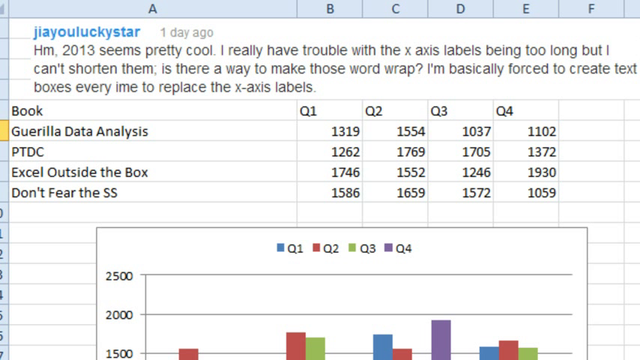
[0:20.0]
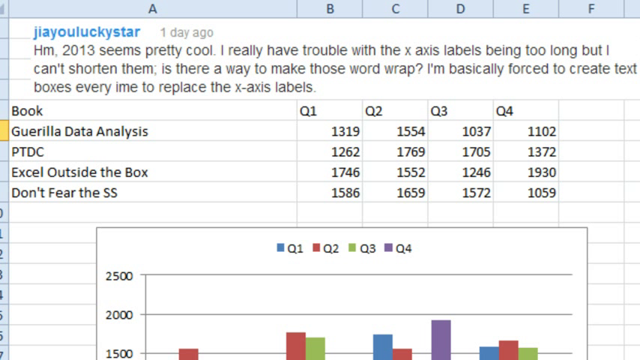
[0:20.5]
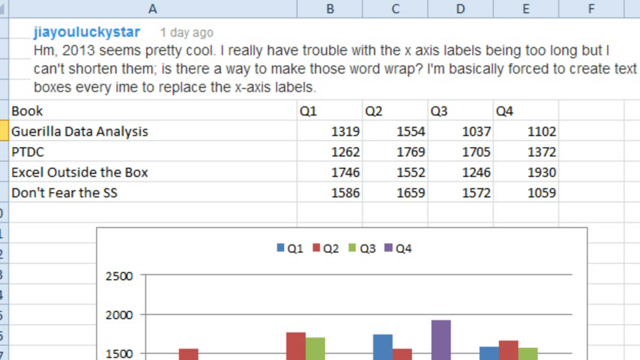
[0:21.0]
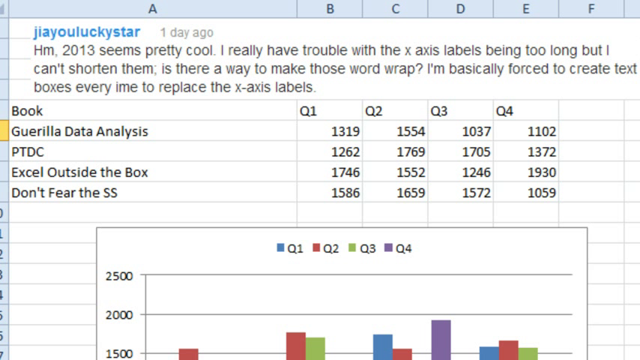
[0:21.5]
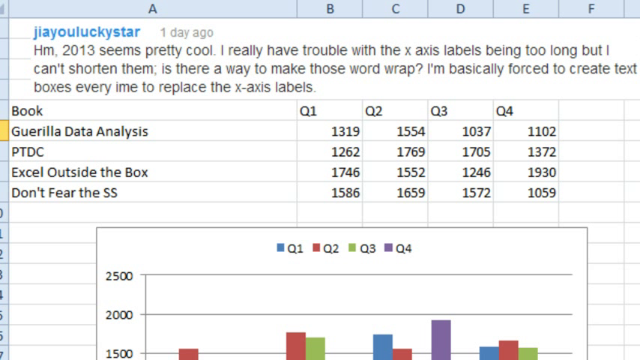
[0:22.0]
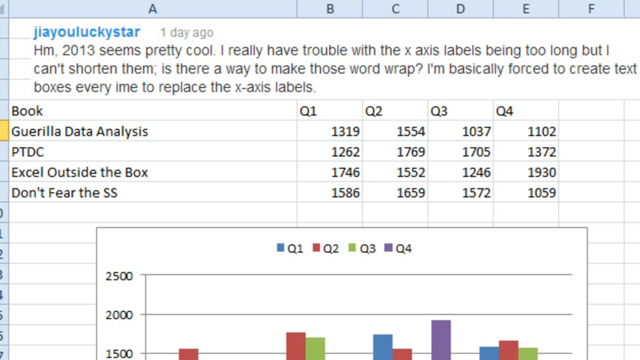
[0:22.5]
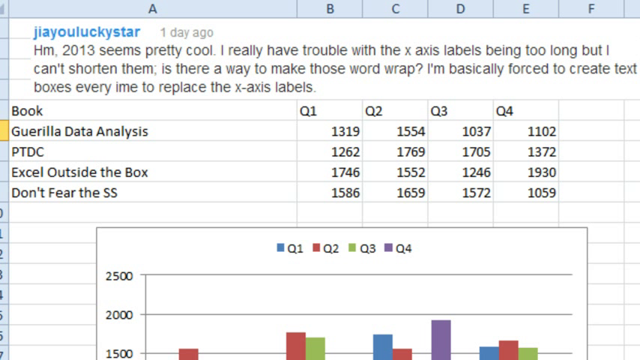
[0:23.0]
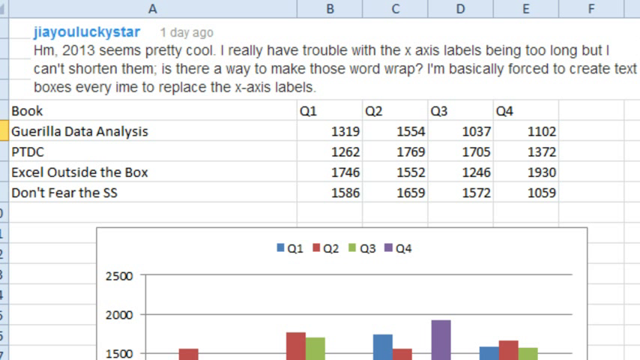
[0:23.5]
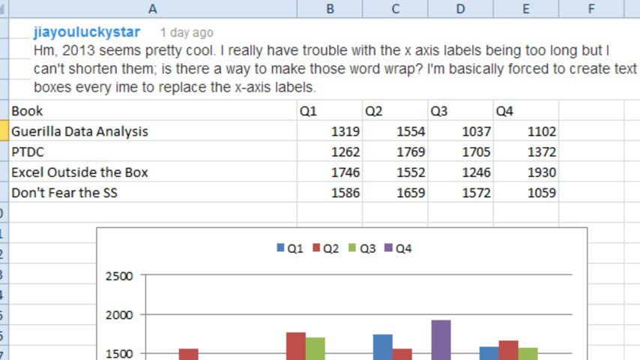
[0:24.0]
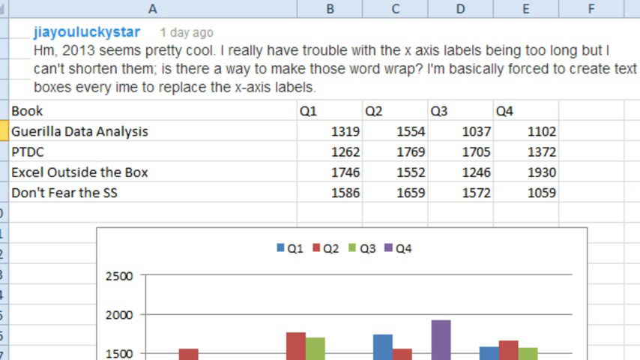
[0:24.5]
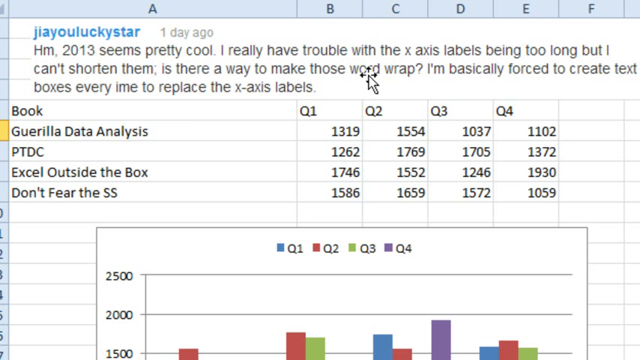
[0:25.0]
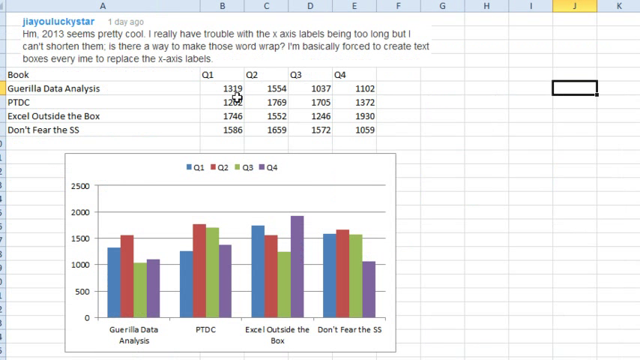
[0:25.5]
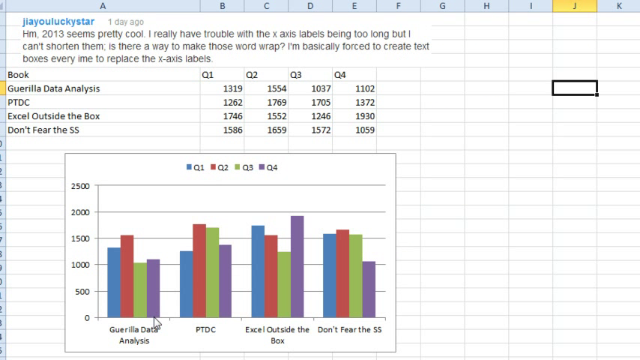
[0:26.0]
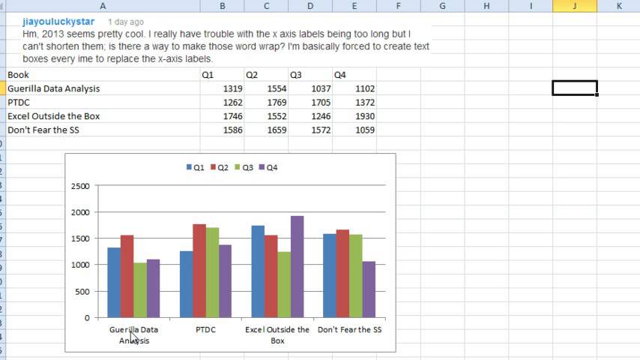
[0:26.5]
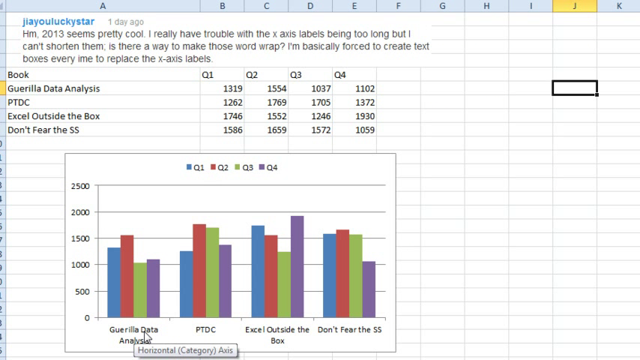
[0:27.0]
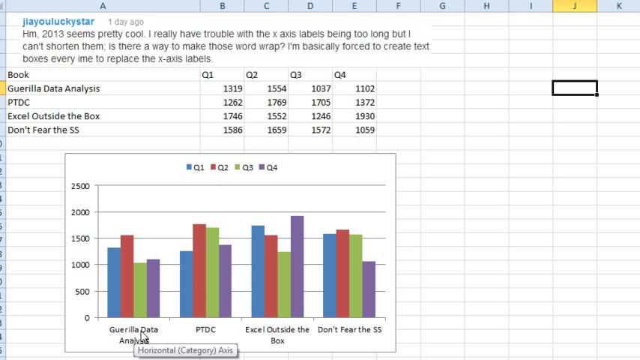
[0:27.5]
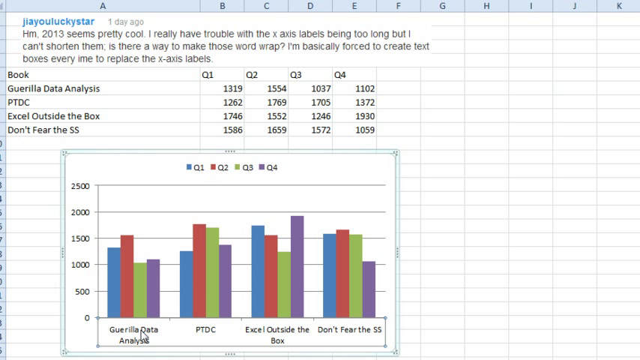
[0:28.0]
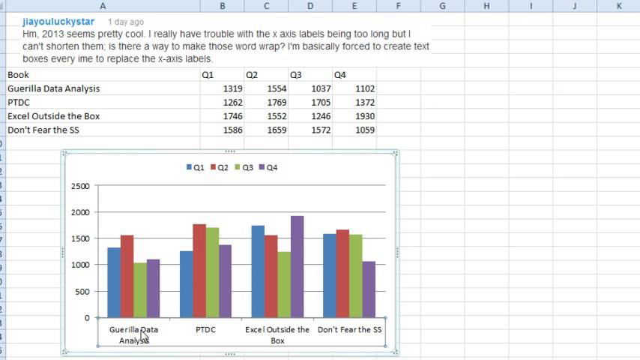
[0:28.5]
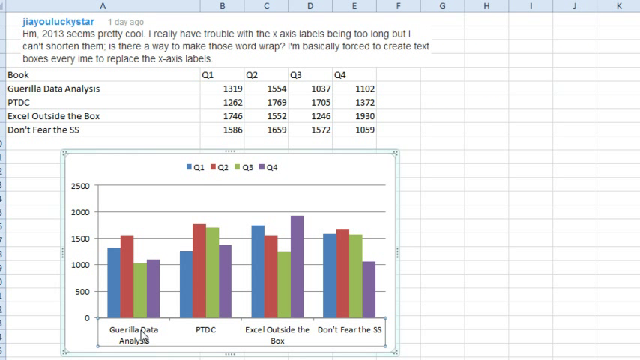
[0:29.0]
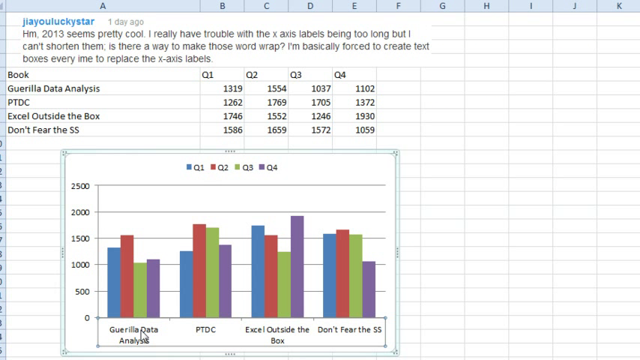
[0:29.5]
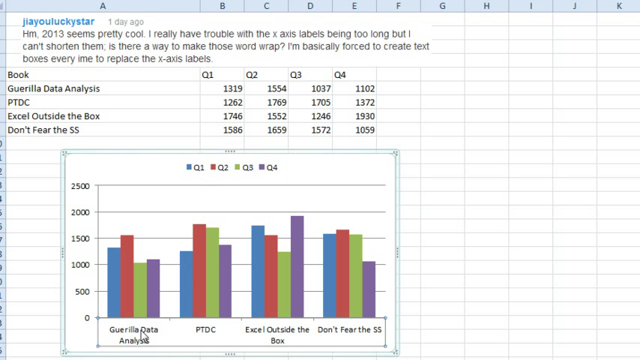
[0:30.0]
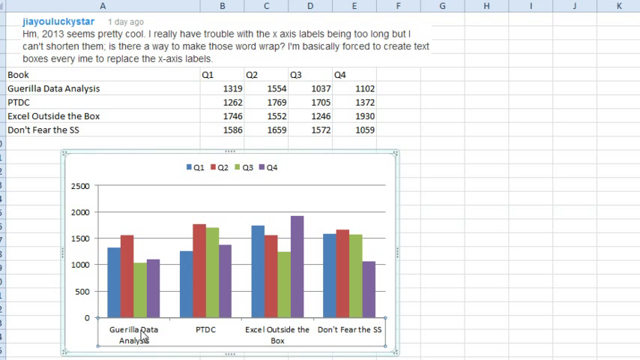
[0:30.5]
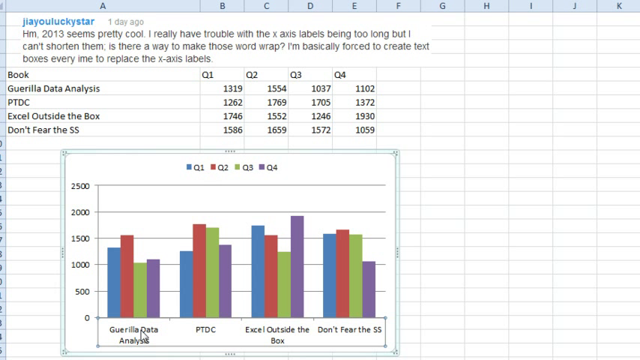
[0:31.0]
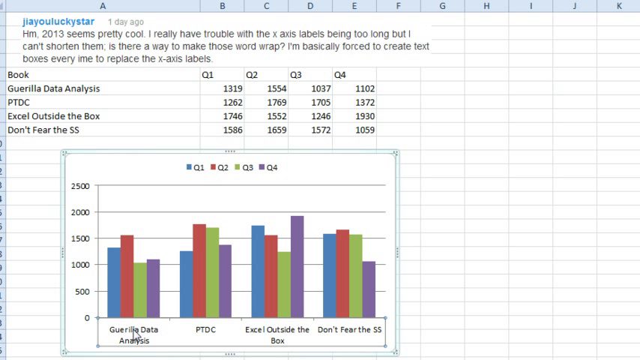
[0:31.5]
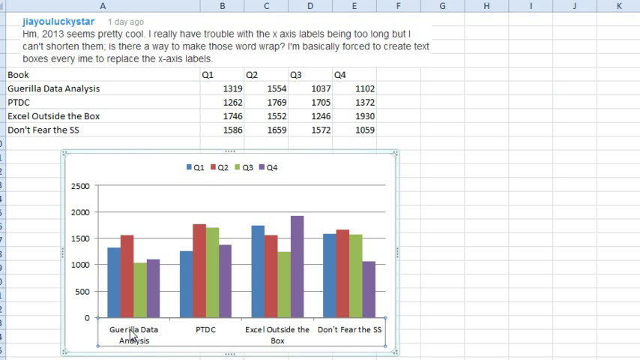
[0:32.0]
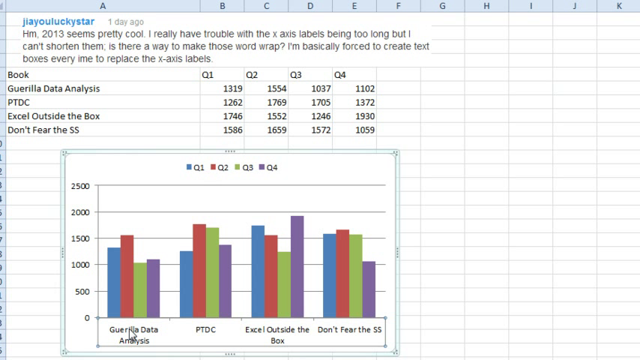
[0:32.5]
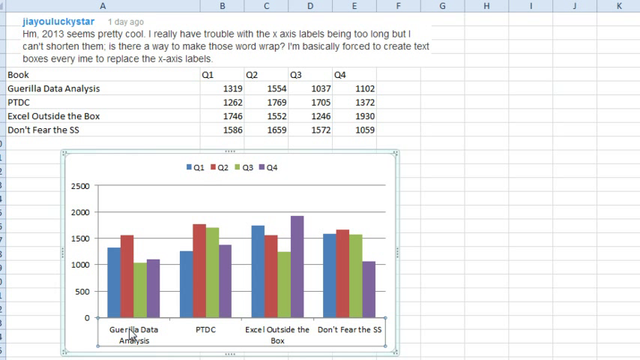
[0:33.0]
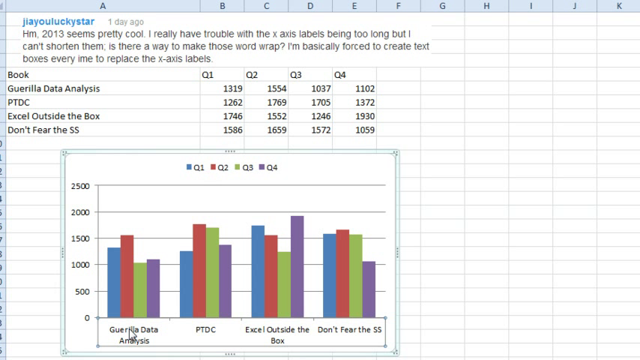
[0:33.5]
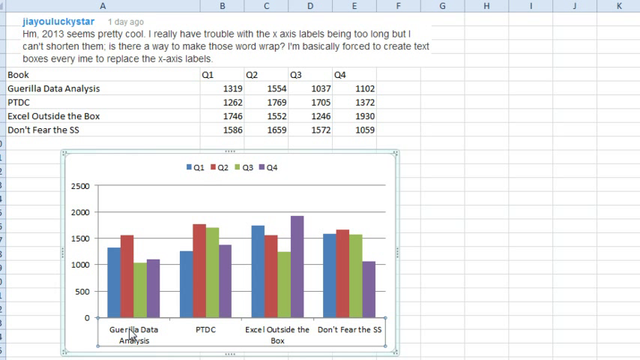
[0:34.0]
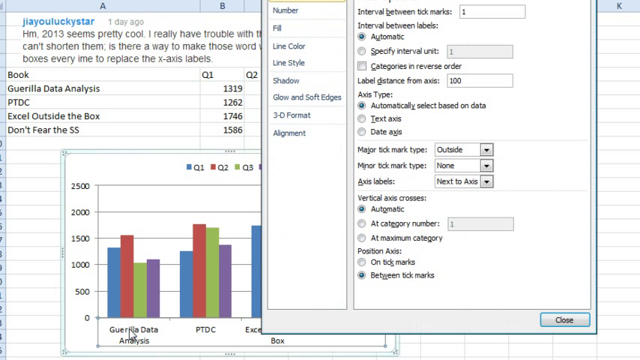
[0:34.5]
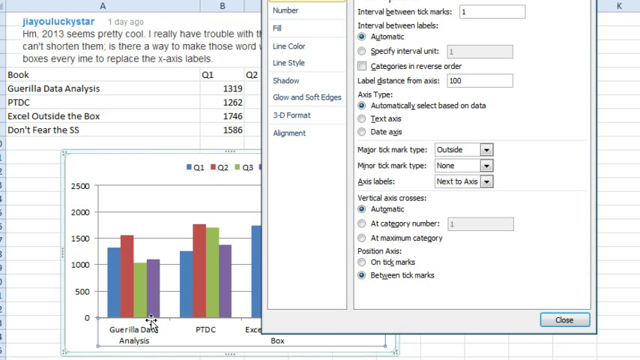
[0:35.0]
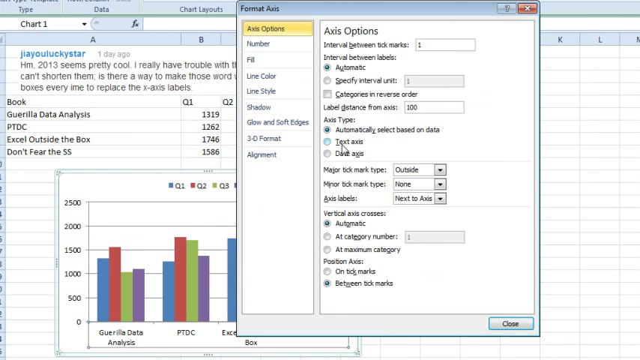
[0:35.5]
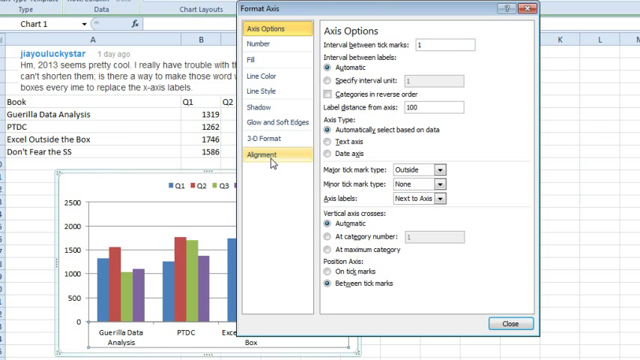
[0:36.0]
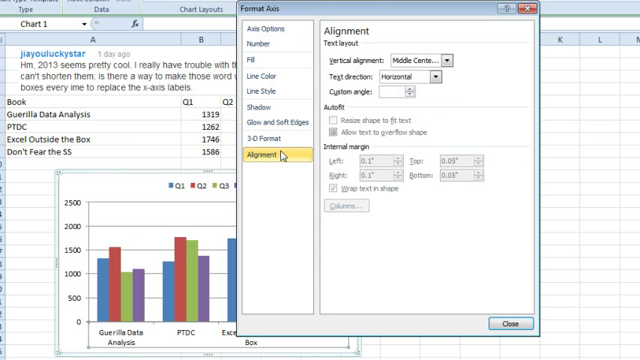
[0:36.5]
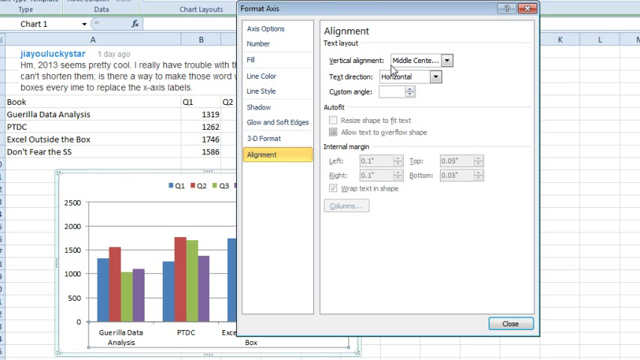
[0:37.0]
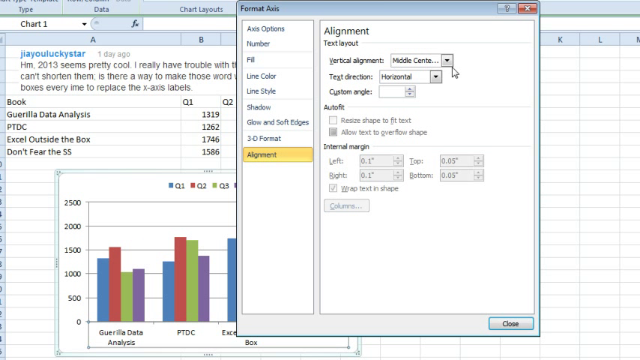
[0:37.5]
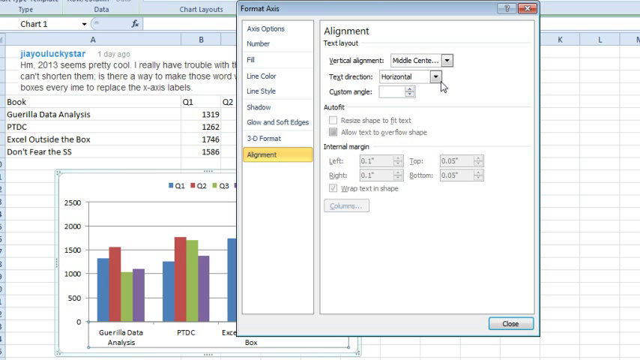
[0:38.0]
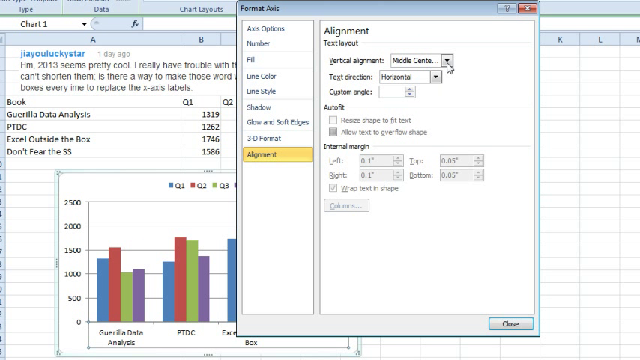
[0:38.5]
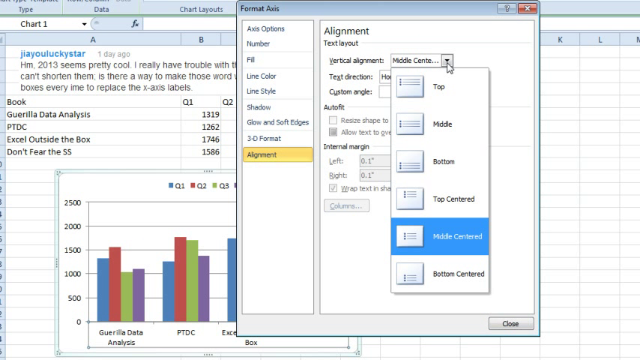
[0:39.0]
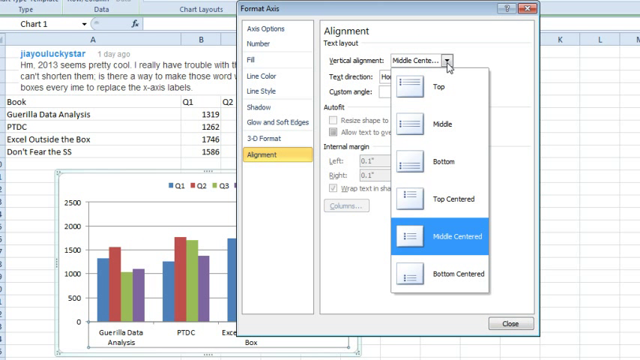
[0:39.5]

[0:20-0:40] A computer screen shows the Microsoft Excel app open. A comment, seemingly from YouTube or some kind of social media, is posted at the top. It reads "J I A U lucky star one day ago. Hmm, 2013 seems pretty cool. I really have trouble with the x-axis labels being too long, but I can't shorten them. Is there a way to make those word wrap? I'm basically forced to create text boxes every time I'm to replace the x-axis labels." The spreadsheet uses columns A, B, C, D and E, with F blank, across multiple rows. Column A reads "Book", "Gorilla Data Analysis", "PTDC", "Excel Outside the Box" and "Don't Fear the SS". Column B reads "Q1", "1319", "1262", "1746", "1586". Column C reads "Q2", "1554", "1769", "1552", "1659". Column D reads "Q3", "1037", "1705", "1246", "1572". Column E reads "Q4", "1102", "1372", "1930", "1059". At the very bottom is a bar graph with four different Qs corresponding to columns B, C, D and E.